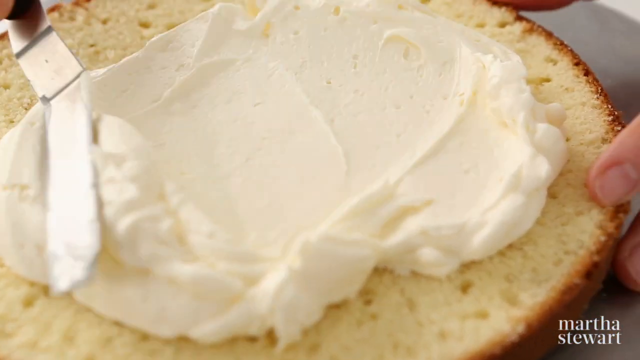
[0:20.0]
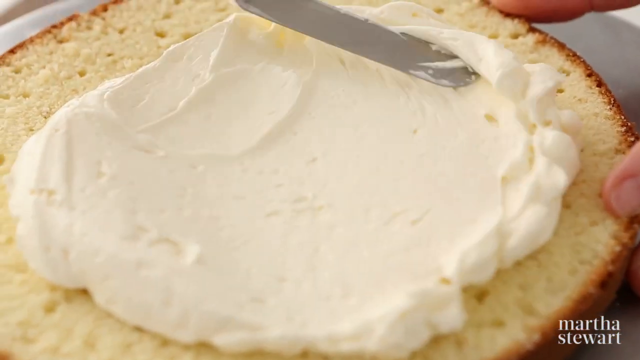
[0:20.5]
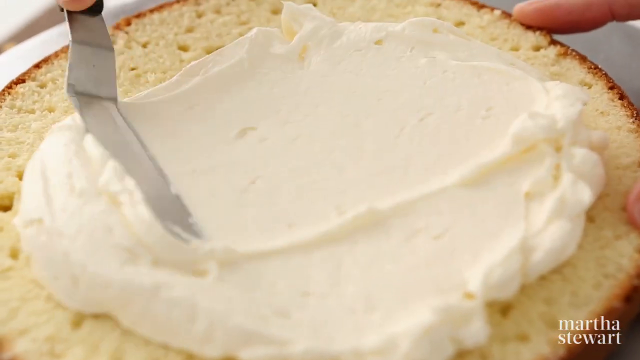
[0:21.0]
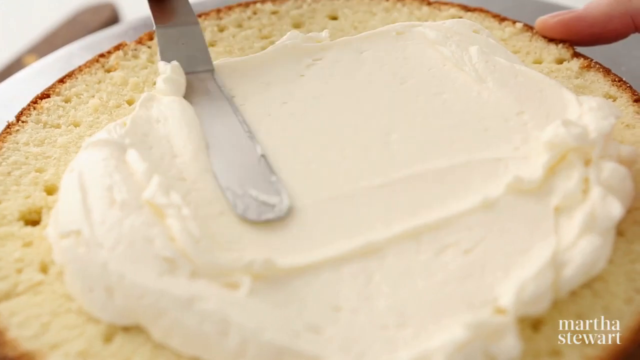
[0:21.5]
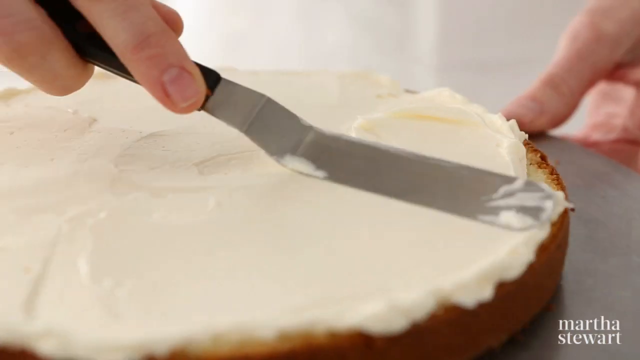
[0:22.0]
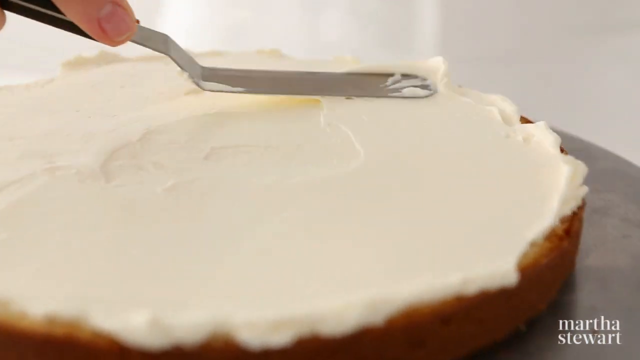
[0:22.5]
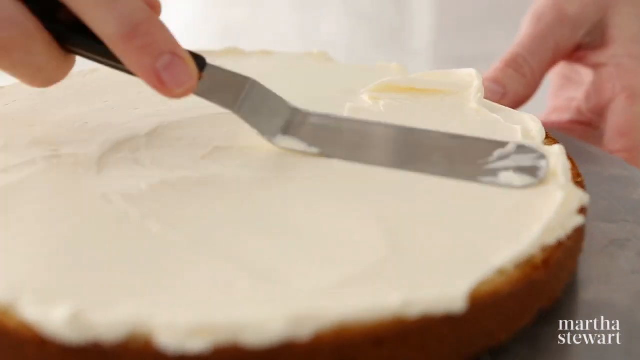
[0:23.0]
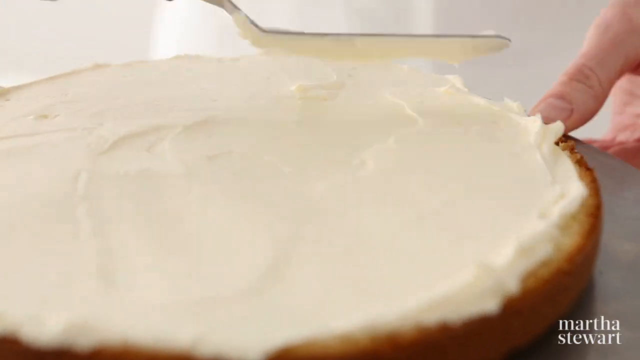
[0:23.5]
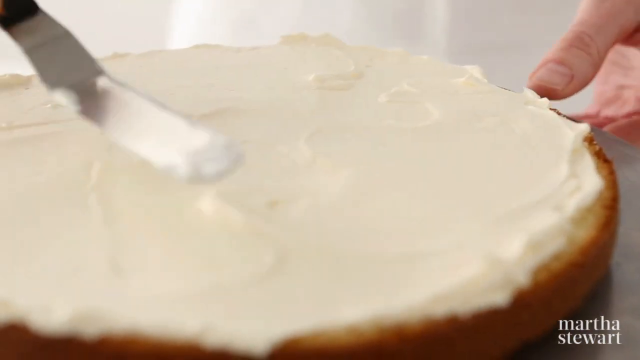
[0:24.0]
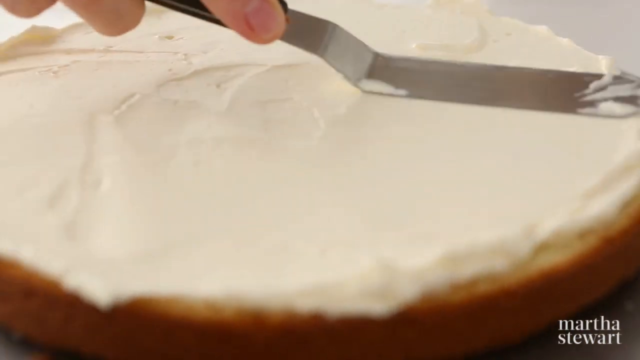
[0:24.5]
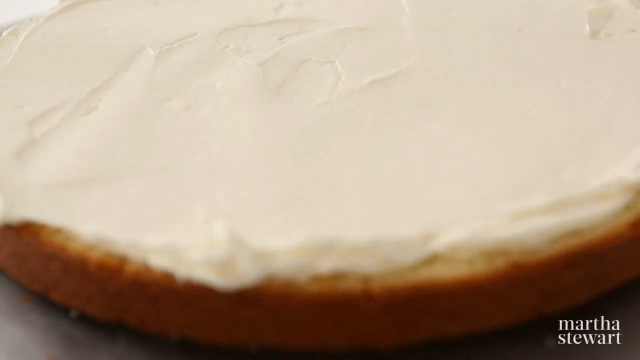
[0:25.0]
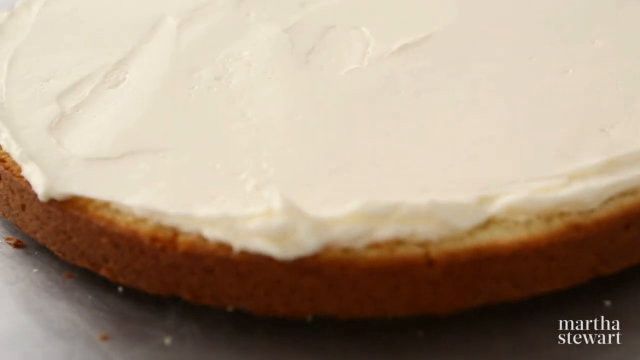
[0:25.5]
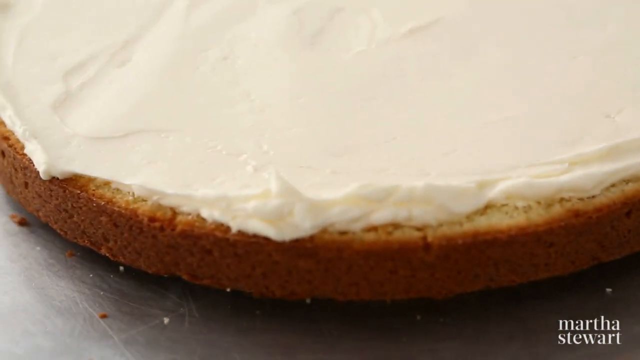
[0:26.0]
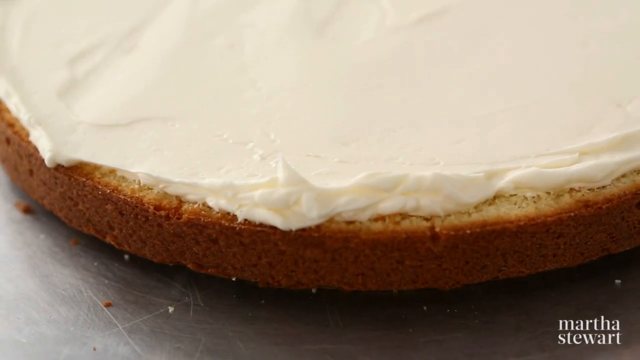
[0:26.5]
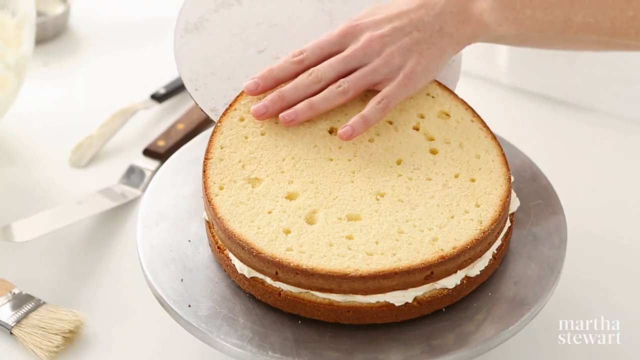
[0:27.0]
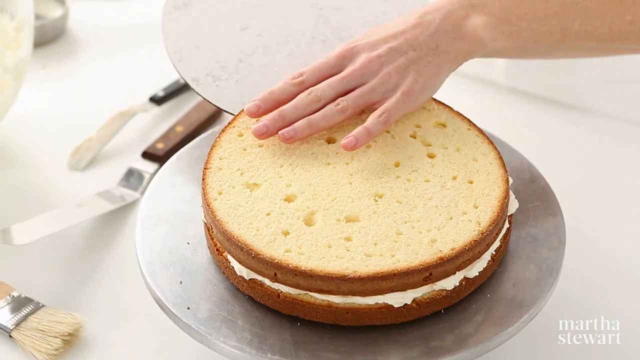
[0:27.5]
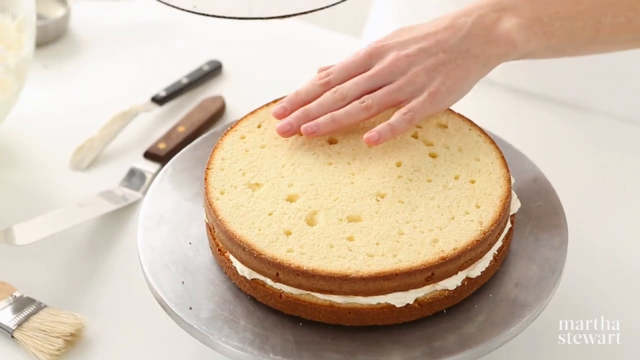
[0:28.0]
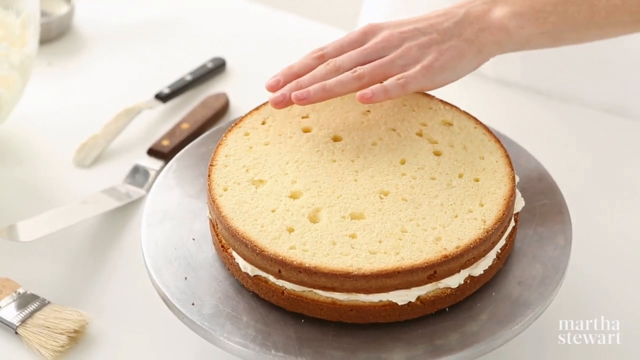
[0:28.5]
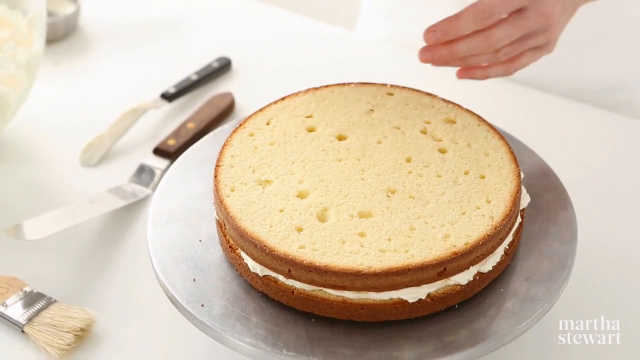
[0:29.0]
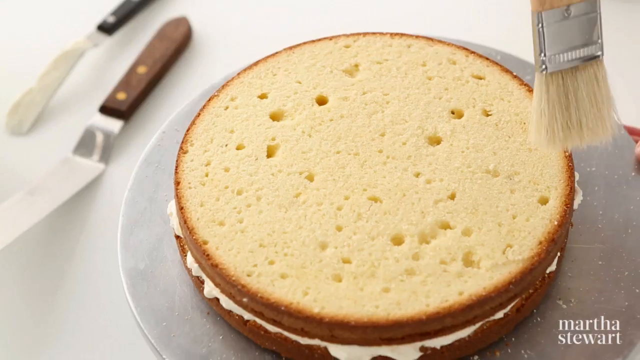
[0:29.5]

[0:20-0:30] In a tutorial on how to crumb coat a cake, a sliced brown vanilla piece of cake is placed onto a metal surface. A dollop of white icing is spread out evenly onto the cake using a silver kitchen utensil with a black handle. Another sliced brown piece of vanilla cake, exactly the same size as the first, is placed on top of the coated one. At the very bottom right of the screen, the word "Martha" appears in white.